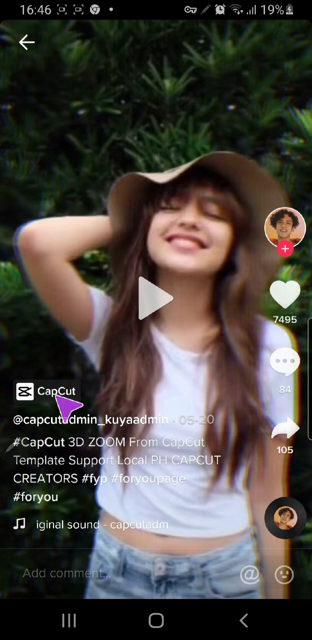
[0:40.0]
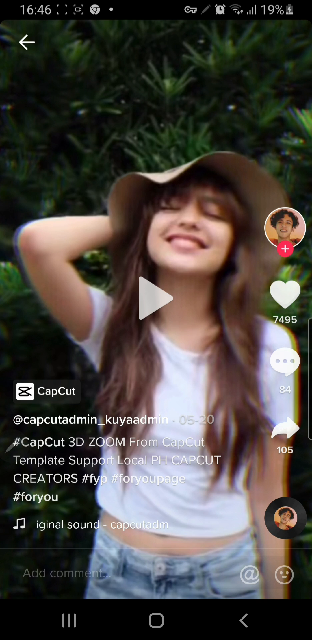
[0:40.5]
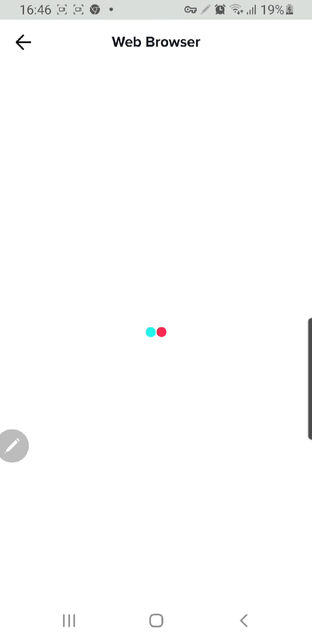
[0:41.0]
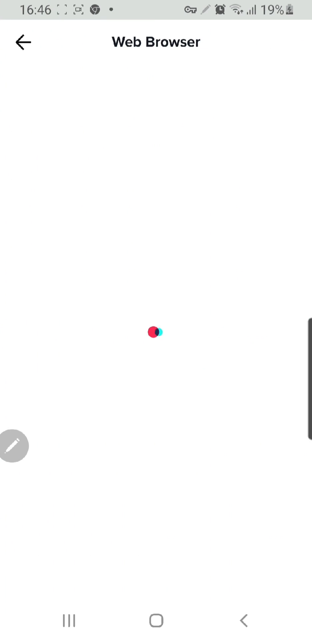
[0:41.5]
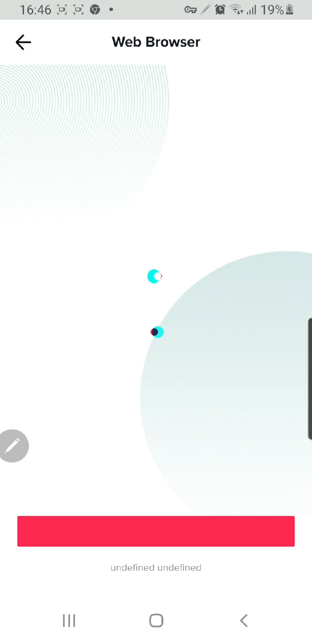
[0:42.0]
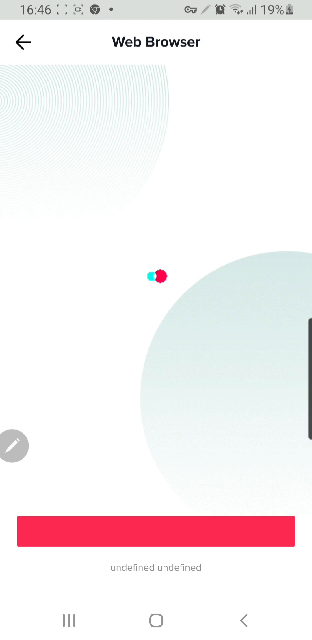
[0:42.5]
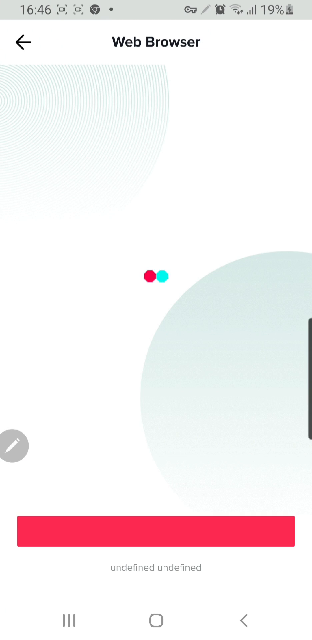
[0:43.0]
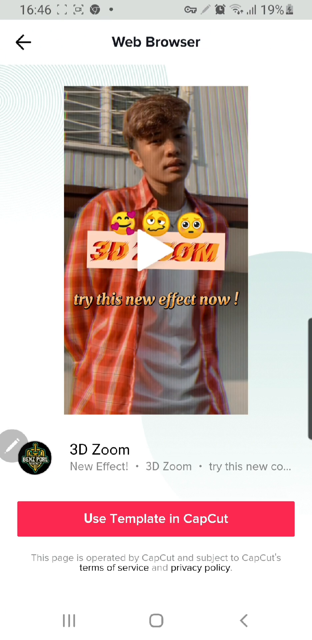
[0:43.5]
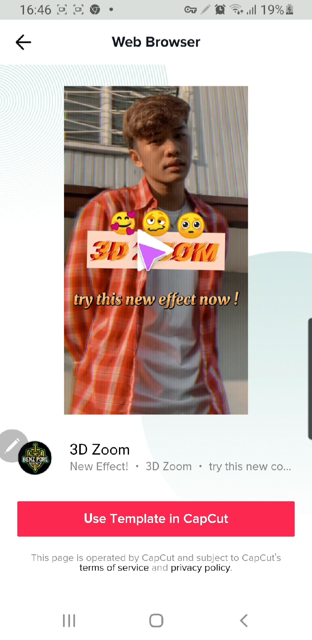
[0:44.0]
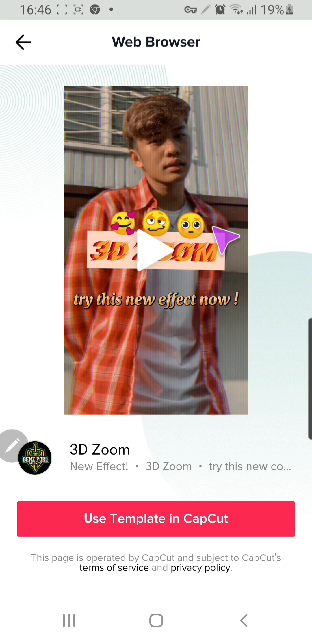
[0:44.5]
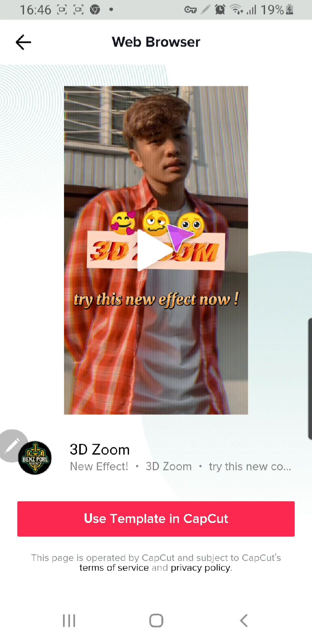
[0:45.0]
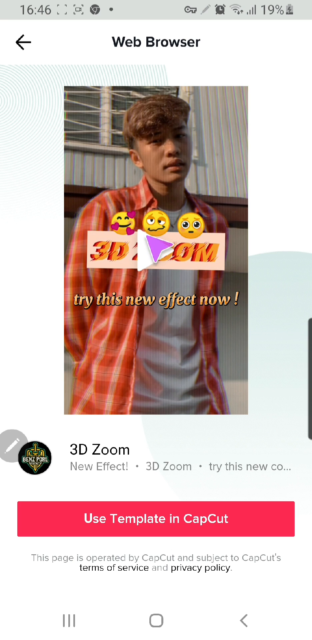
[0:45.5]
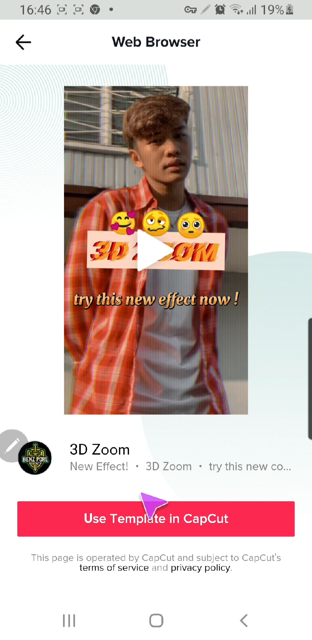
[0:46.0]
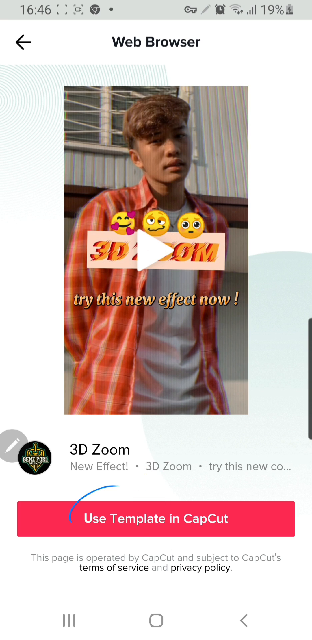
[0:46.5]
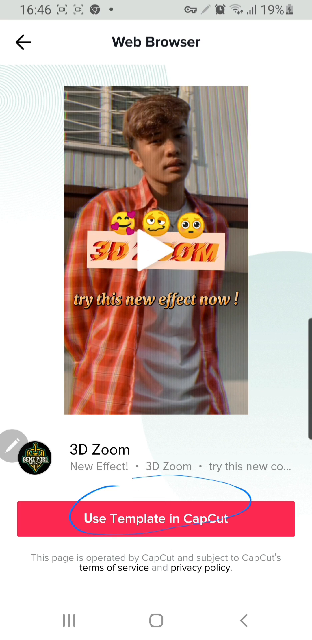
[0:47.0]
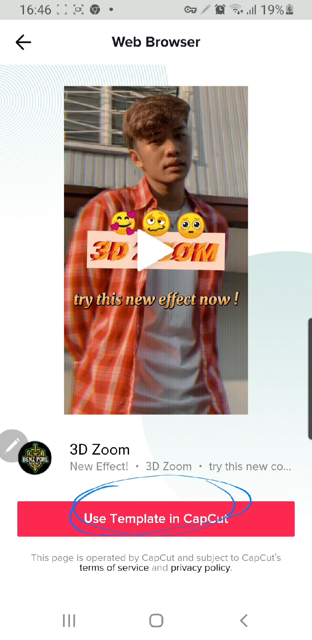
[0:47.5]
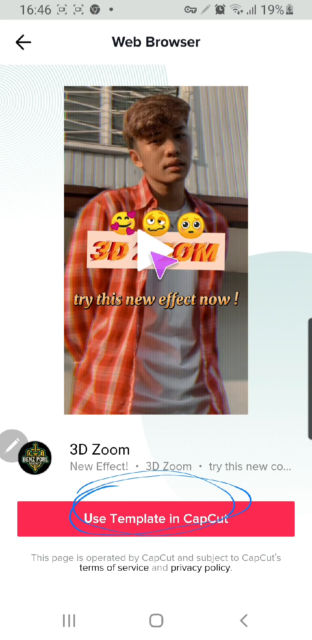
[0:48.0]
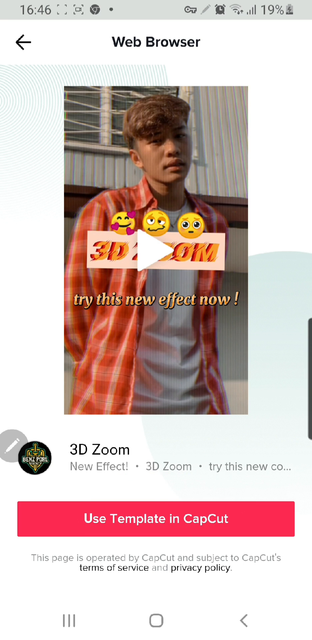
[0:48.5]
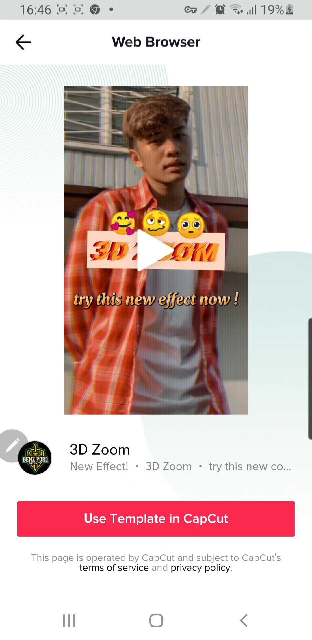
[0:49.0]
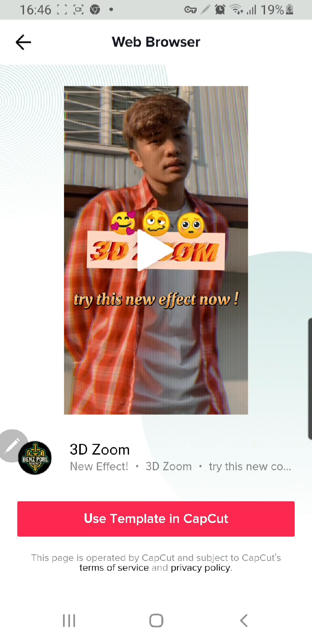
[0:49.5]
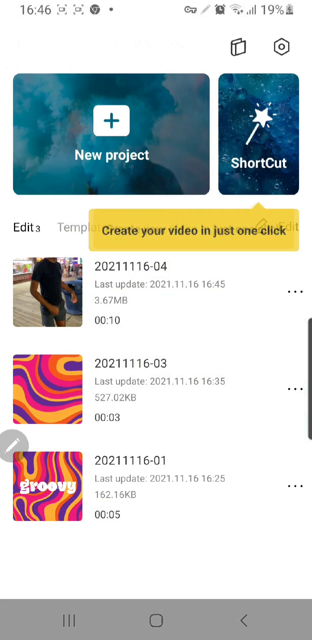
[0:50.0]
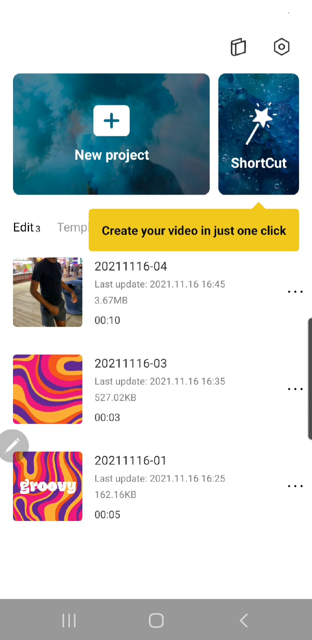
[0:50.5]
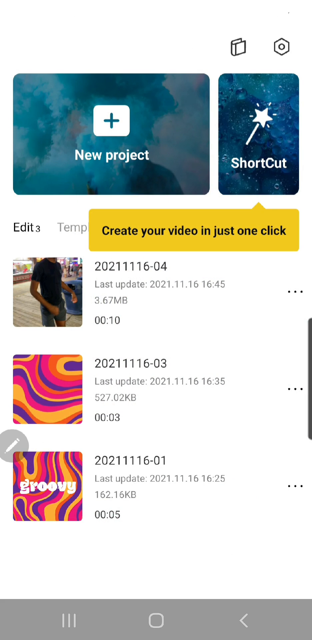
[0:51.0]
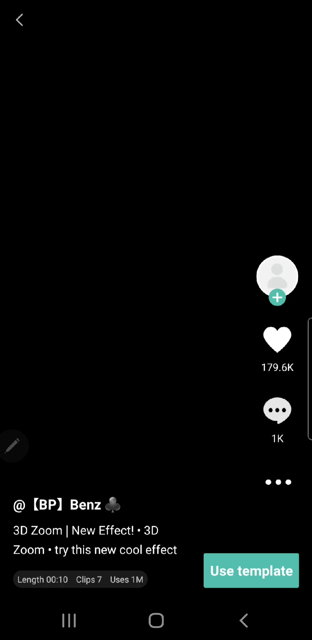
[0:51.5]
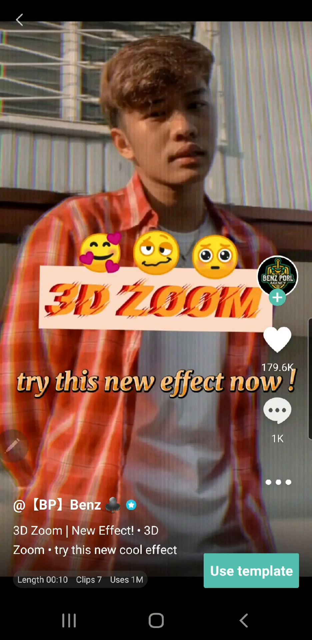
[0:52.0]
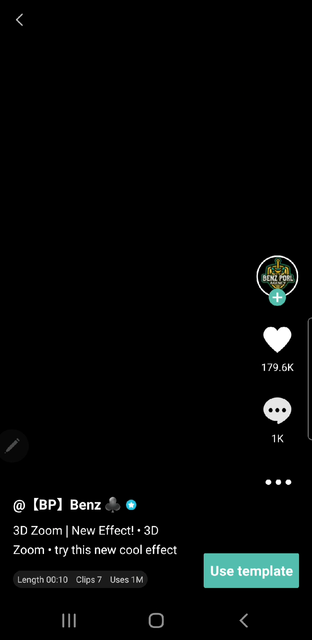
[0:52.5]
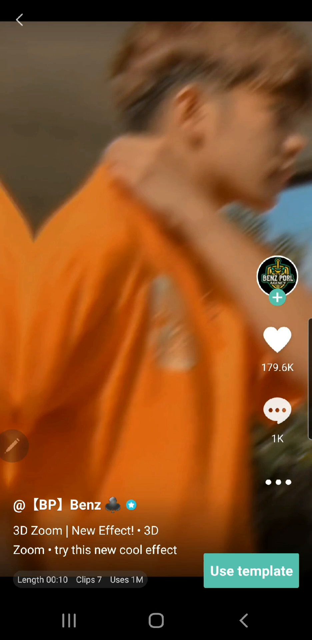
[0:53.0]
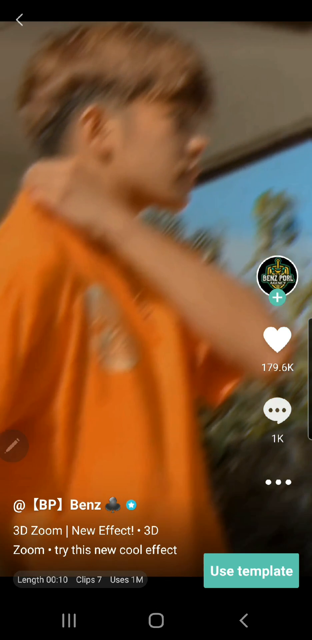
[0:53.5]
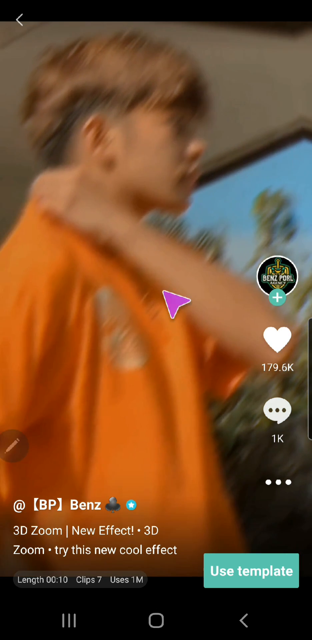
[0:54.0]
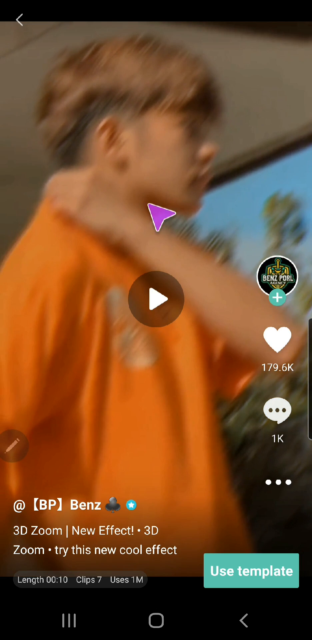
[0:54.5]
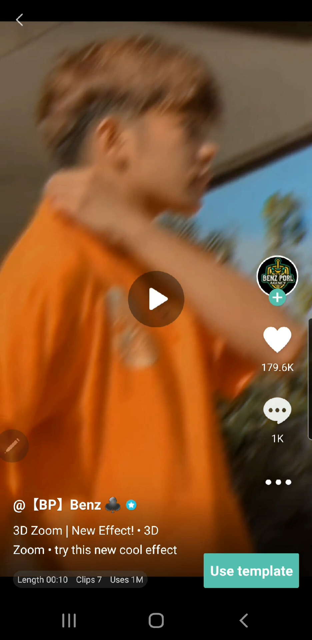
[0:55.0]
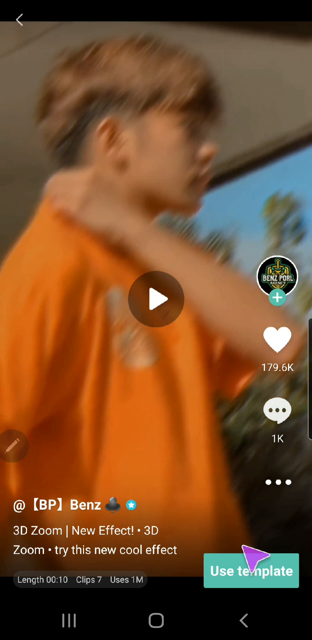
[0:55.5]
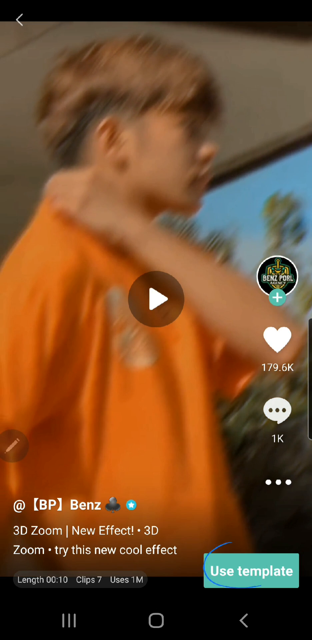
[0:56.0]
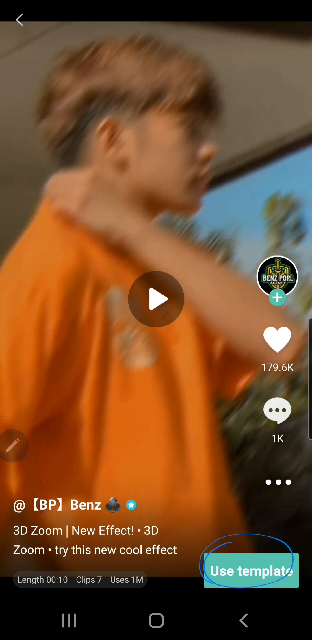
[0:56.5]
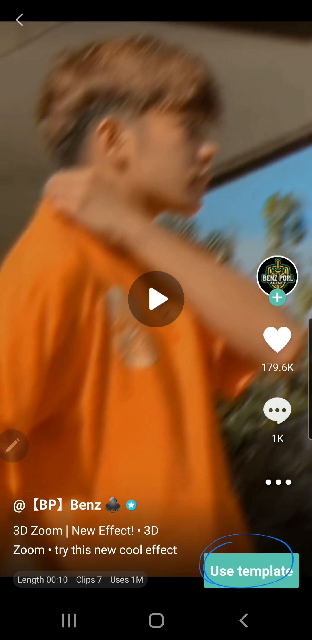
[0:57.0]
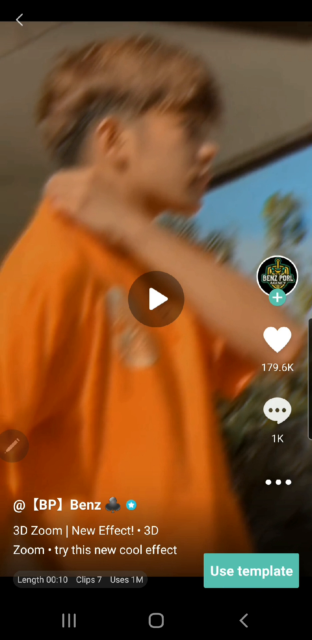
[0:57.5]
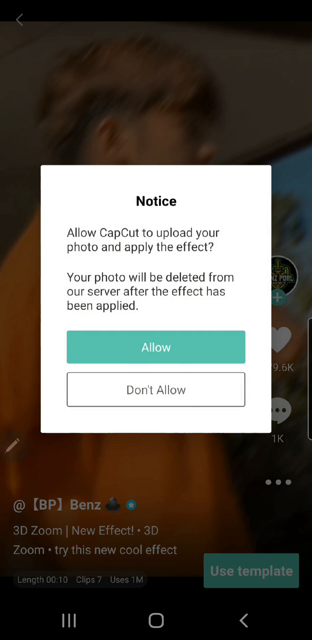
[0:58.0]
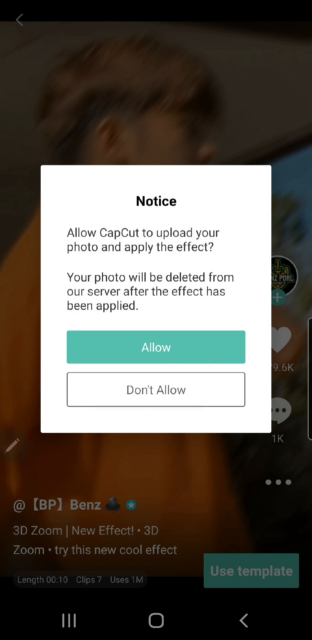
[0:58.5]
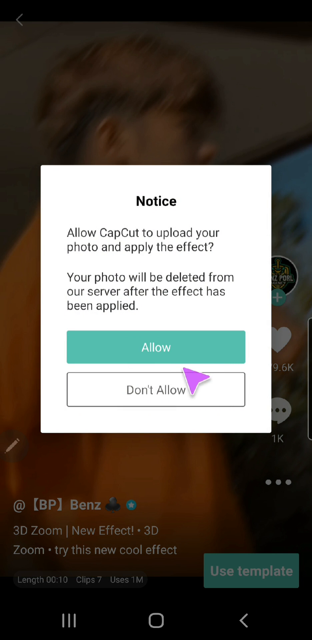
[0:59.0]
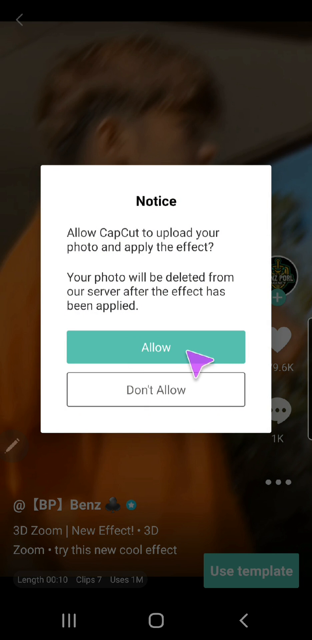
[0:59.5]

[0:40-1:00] The user clicks the CapCut button and a web browser opens, with "web browser" at the very top. The pointer moves down to the bottom, where it says "use template in CapCut", and circles it. A video plays of a man wearing an orange shirt. The pointer moves to the bottom right corner, circles a button that says "Use Template", and clicks it. A window pops up in the center titled "Notice", with text reading "Allow CapCut to open your photo and apply the effect. Your photo will be deleted from our server after the effect has been applied." There are two buttons, "Allow" and, below it, "Don't Allow". The pointer goes up to the Allow button and clicks it.